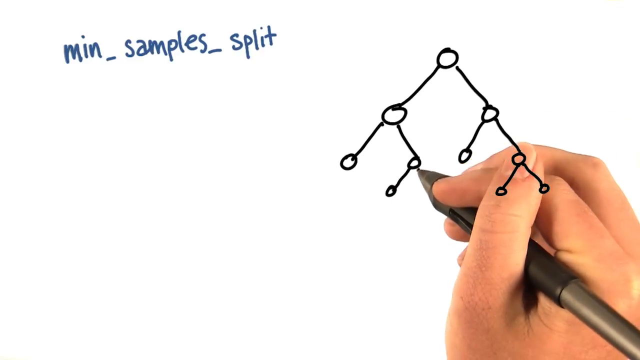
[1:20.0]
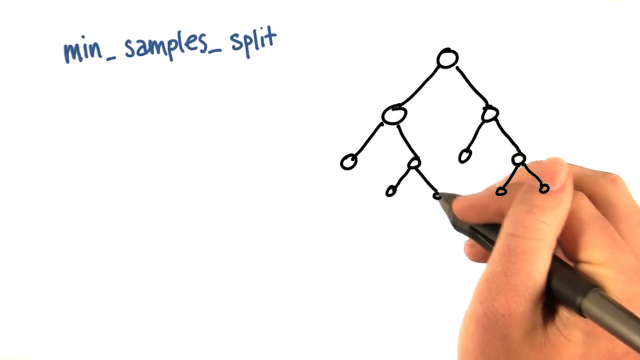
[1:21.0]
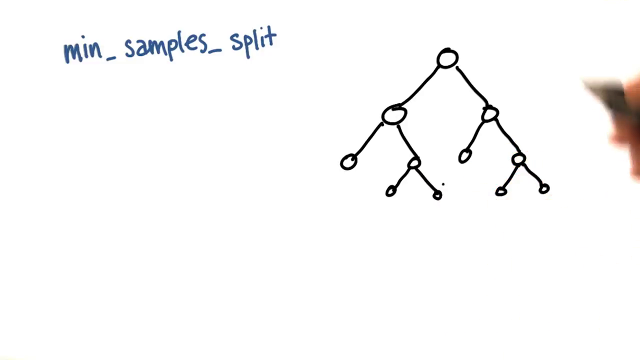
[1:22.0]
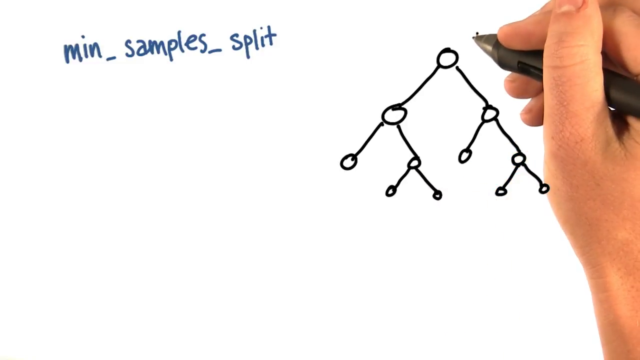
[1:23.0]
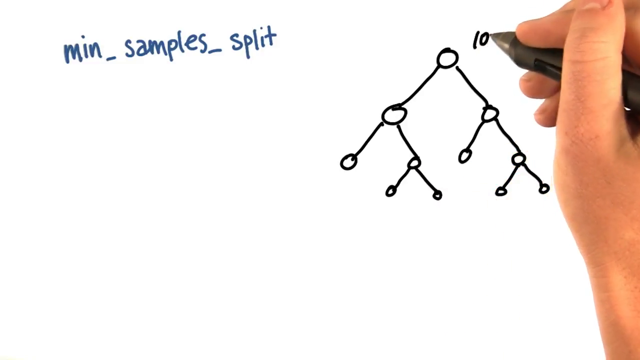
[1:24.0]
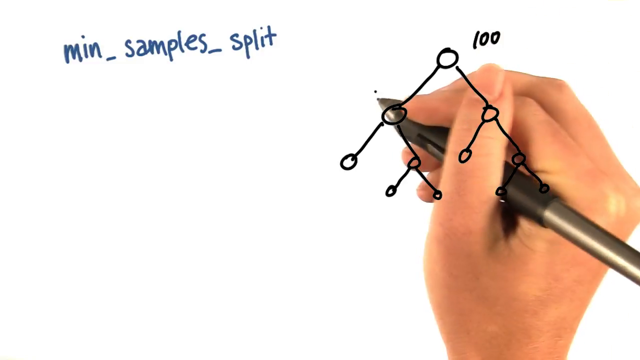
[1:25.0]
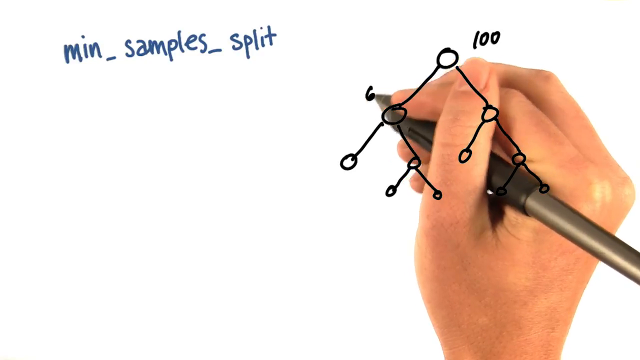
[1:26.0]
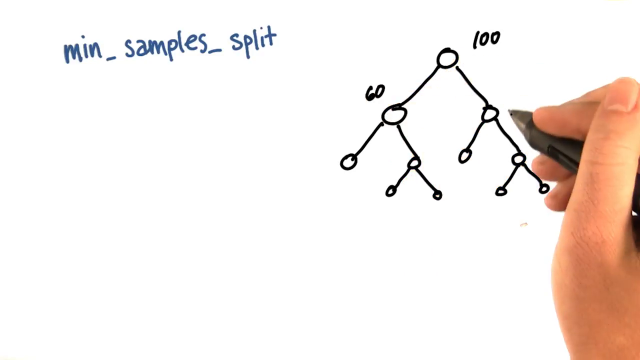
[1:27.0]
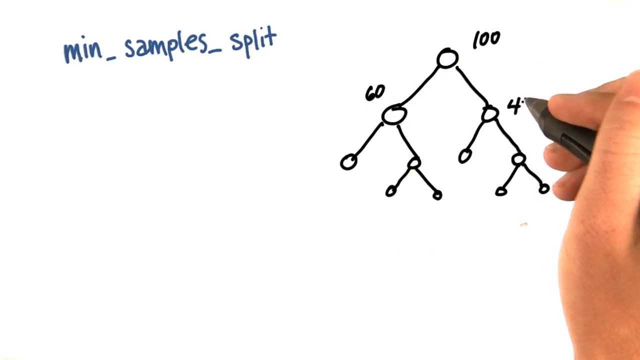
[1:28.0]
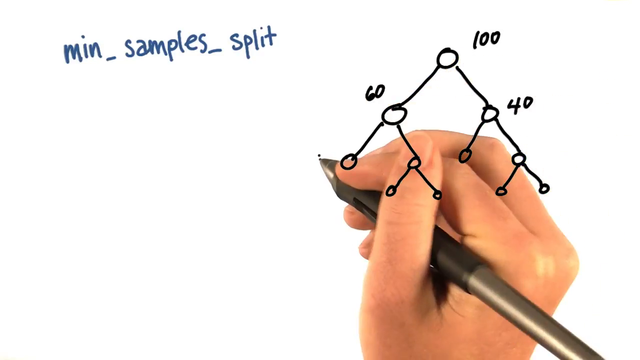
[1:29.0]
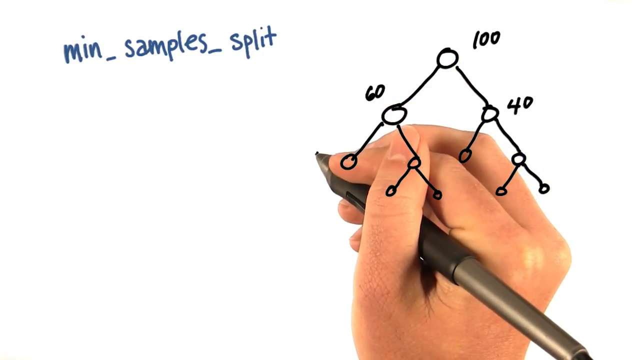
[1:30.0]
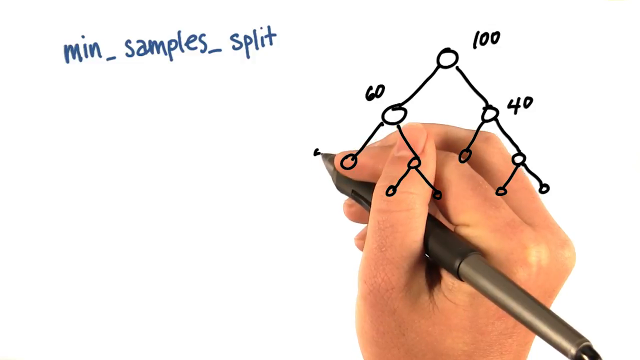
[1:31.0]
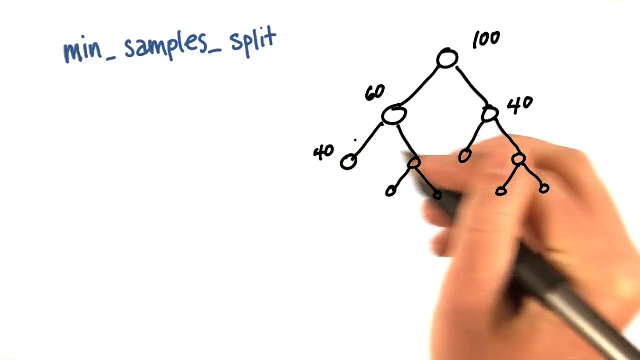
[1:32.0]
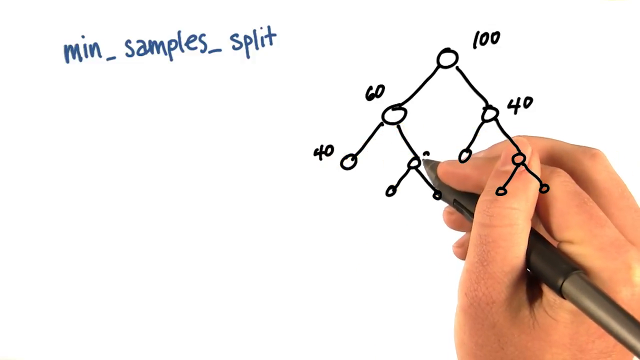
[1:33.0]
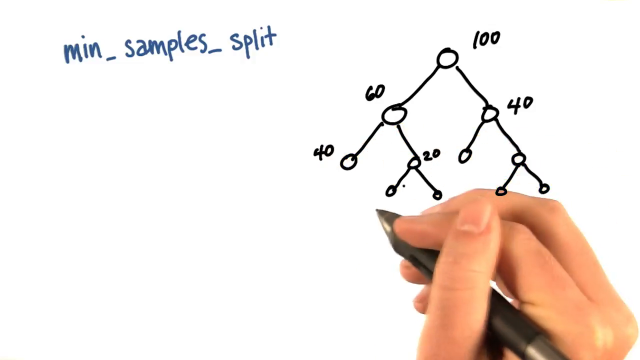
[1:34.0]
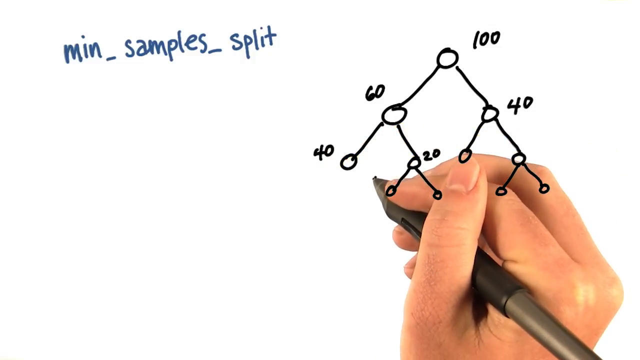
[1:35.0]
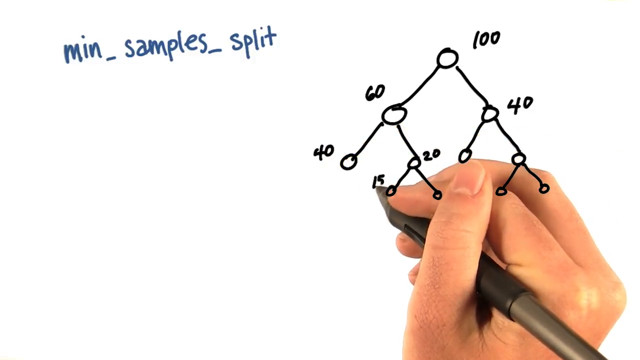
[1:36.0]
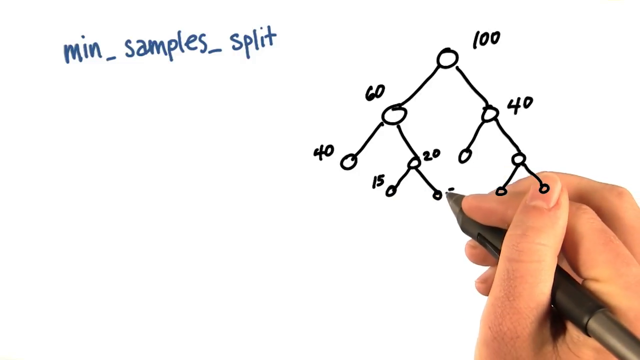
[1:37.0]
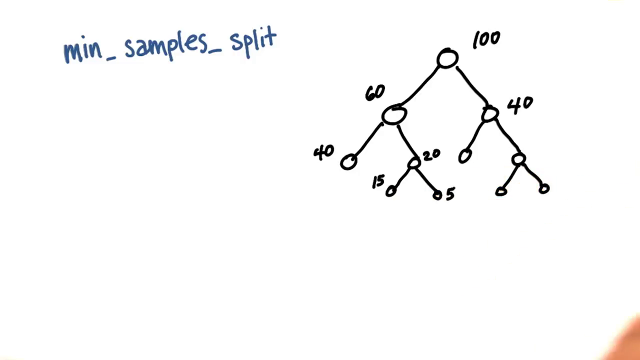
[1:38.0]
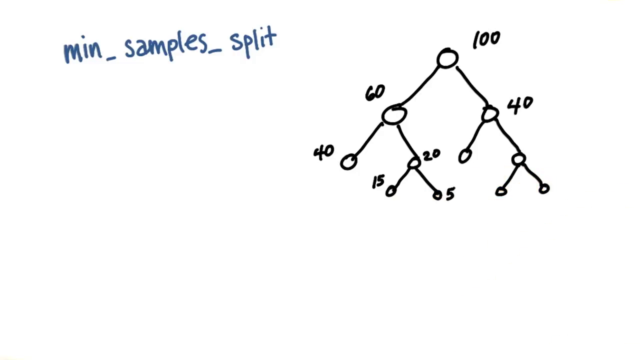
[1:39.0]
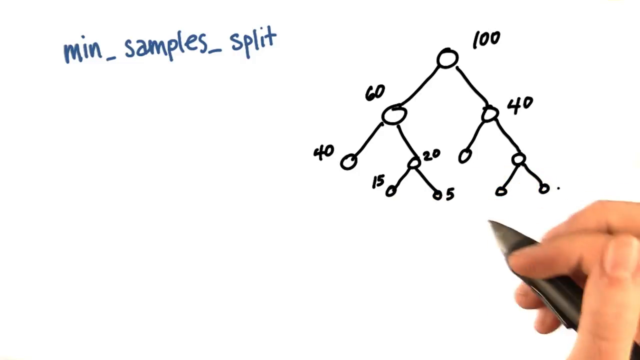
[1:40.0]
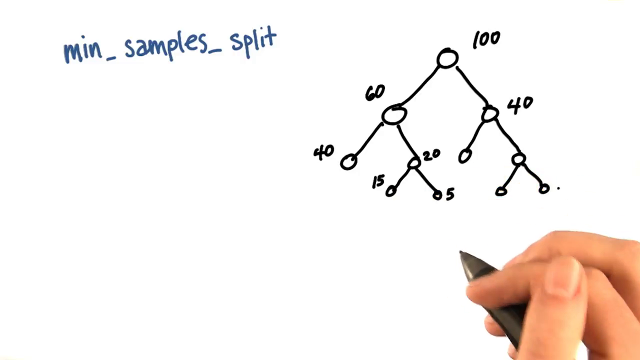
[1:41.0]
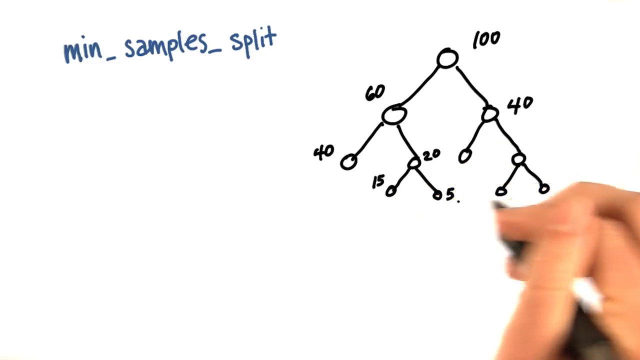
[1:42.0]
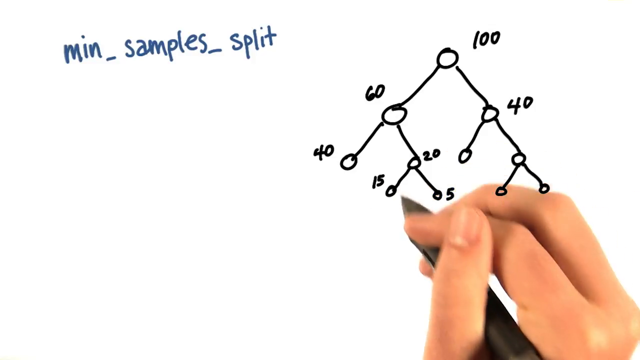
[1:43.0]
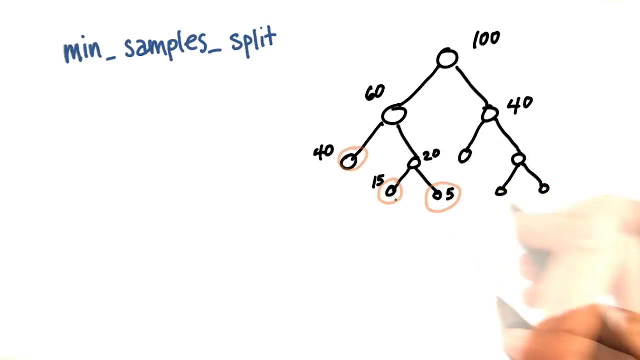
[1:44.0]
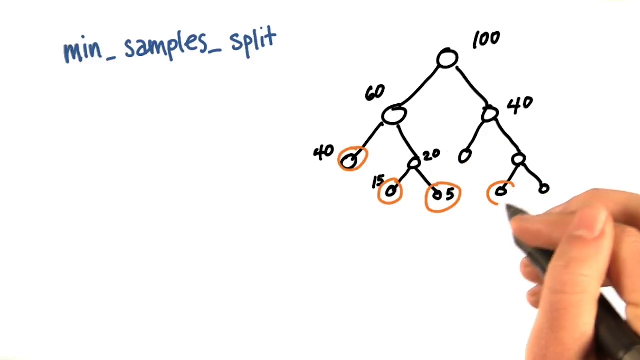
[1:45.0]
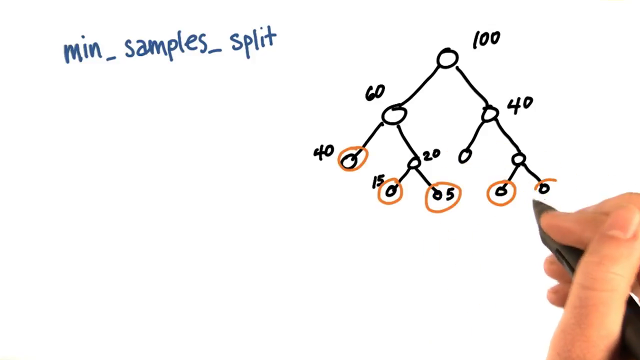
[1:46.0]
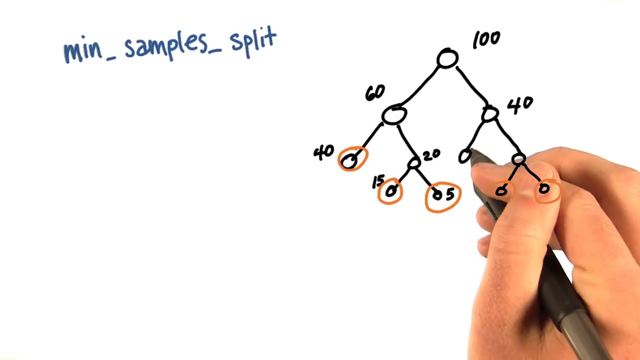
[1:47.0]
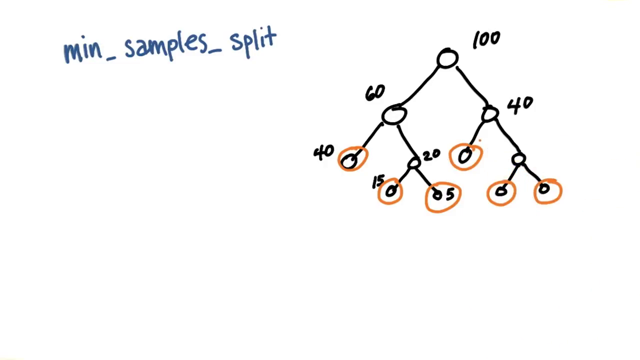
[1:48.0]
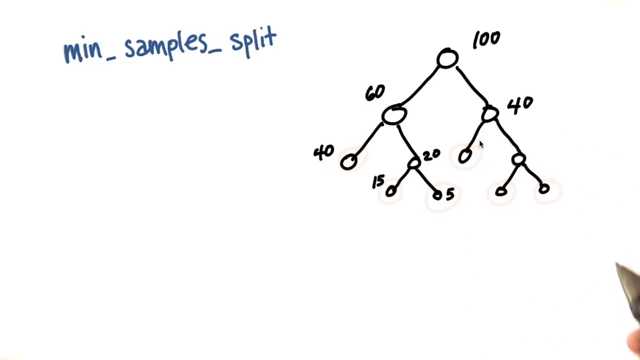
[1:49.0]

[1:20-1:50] The person writes on the nodes and edges. The original node at the top is labeled 100; of the two nodes below it, the left is labeled 60 and the right 40. Another left node is labeled 40 and its right counterpart 20. The node labeled 20 has a left node labeled 15 and a right node labeled 5. The person gestures with the pen, pointing at things without necessarily writing, and then uses a light orange color to circle the bottom nodes that came from the original left node, those labeled 40, 15 and 5. The bottom nodes that came from the original right node are also circled, as well as the original right node's left node.